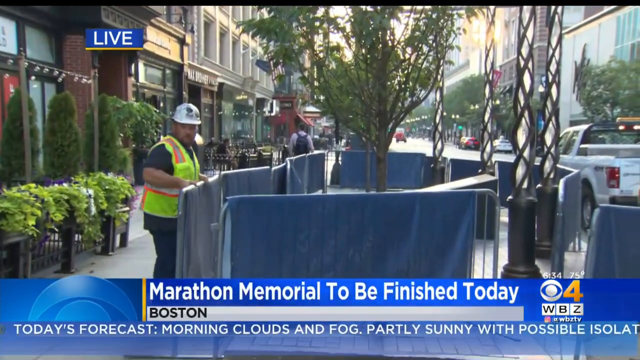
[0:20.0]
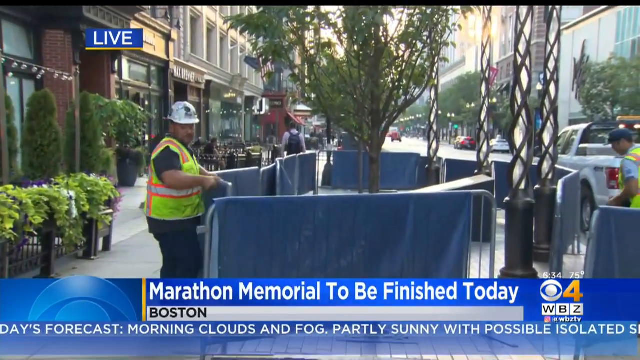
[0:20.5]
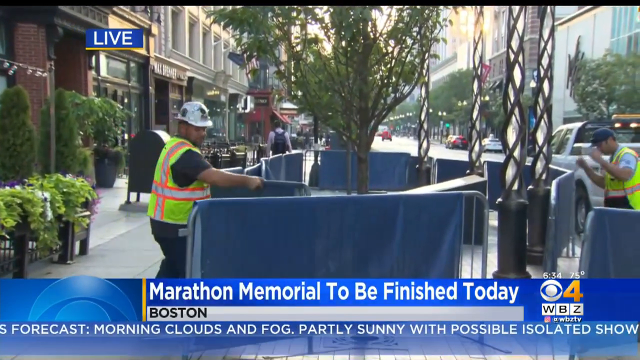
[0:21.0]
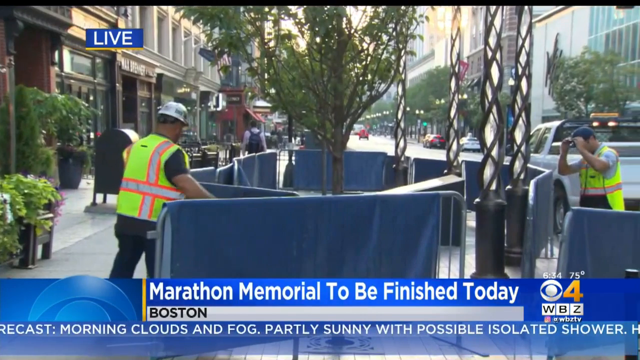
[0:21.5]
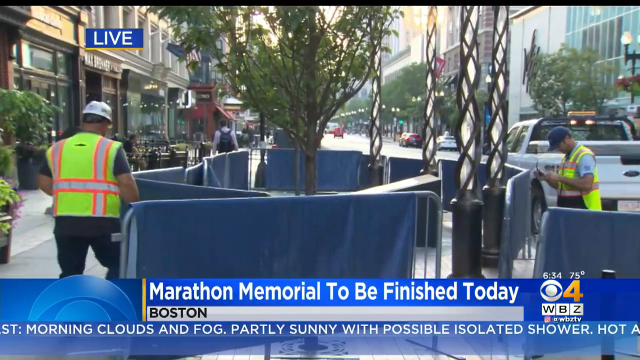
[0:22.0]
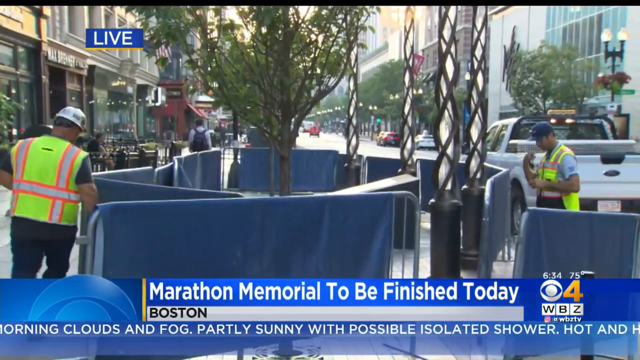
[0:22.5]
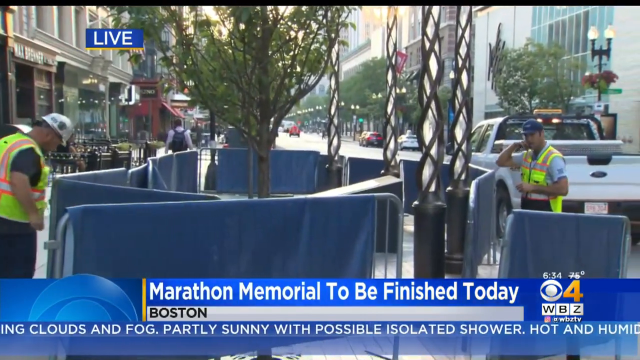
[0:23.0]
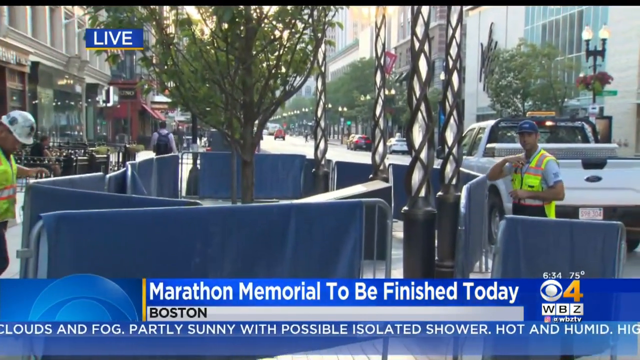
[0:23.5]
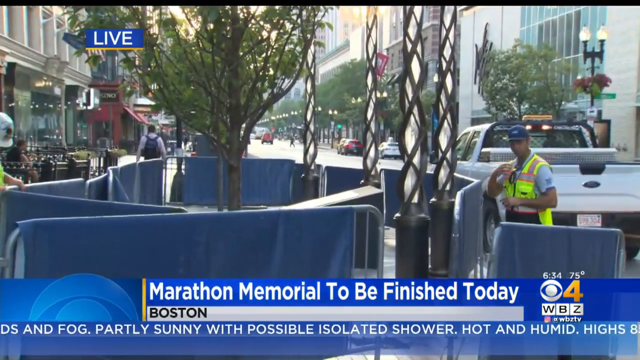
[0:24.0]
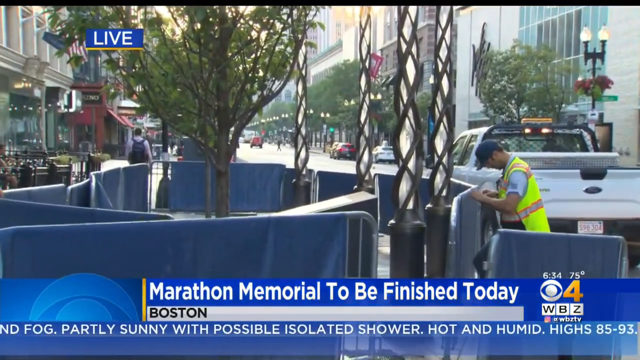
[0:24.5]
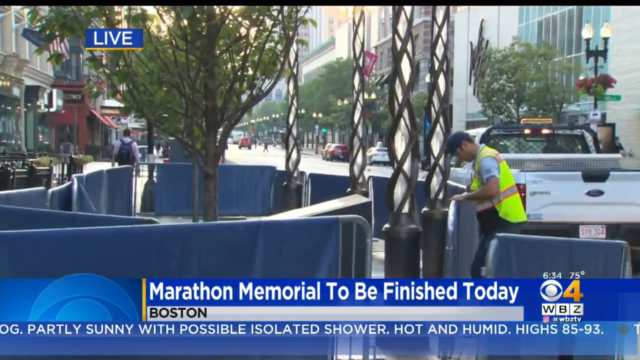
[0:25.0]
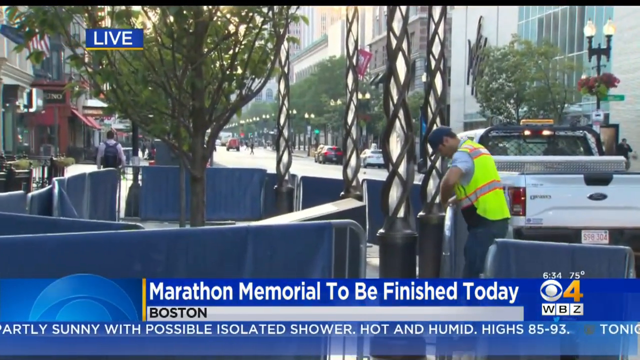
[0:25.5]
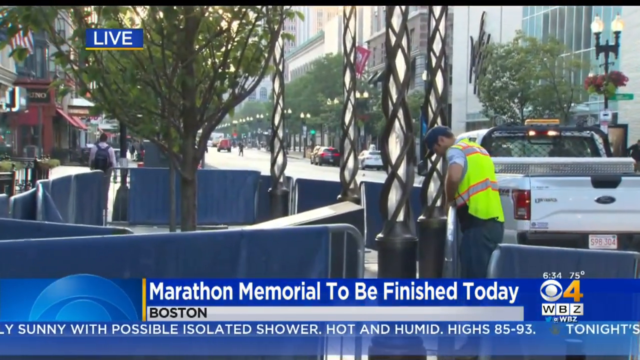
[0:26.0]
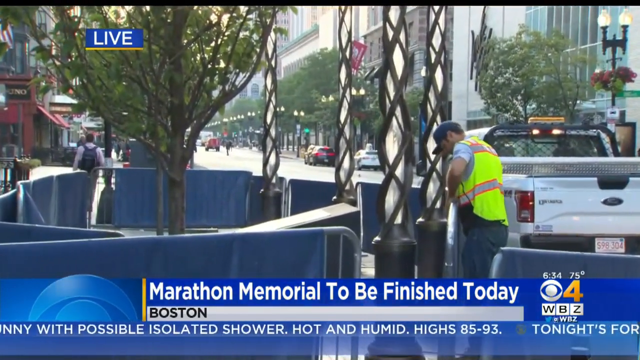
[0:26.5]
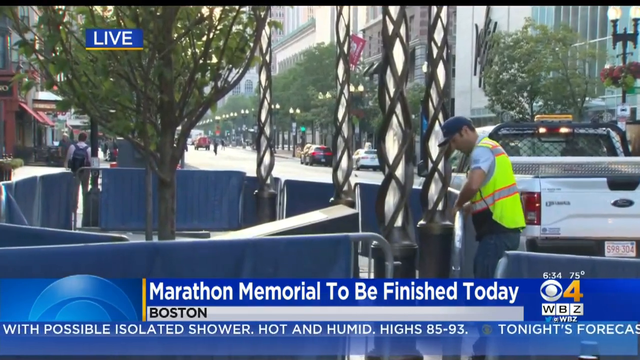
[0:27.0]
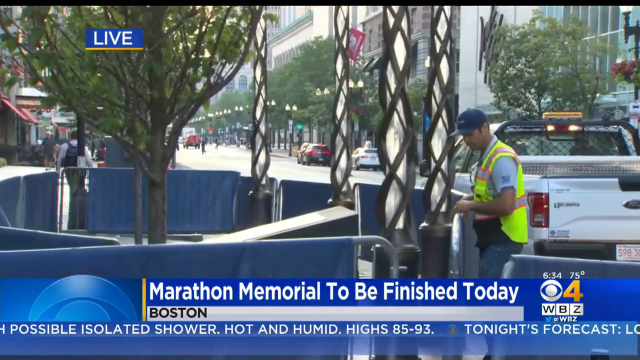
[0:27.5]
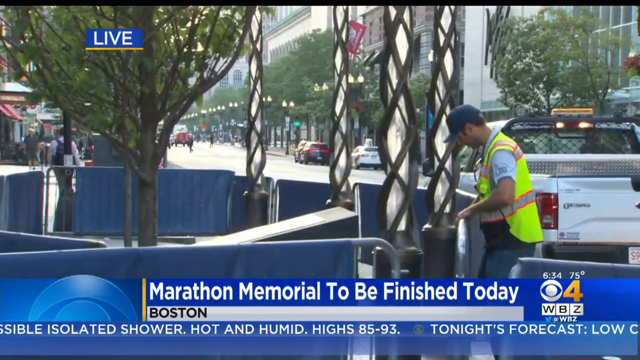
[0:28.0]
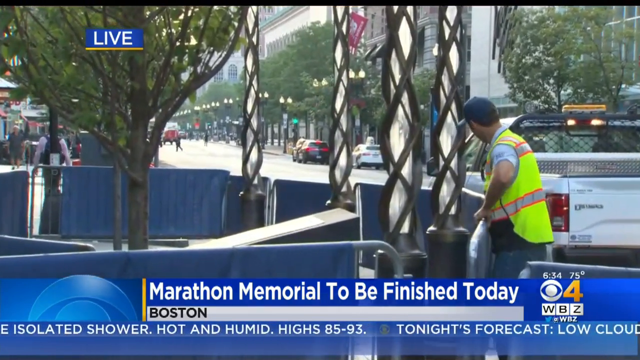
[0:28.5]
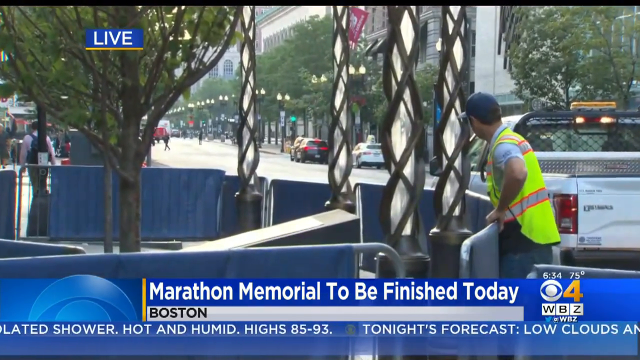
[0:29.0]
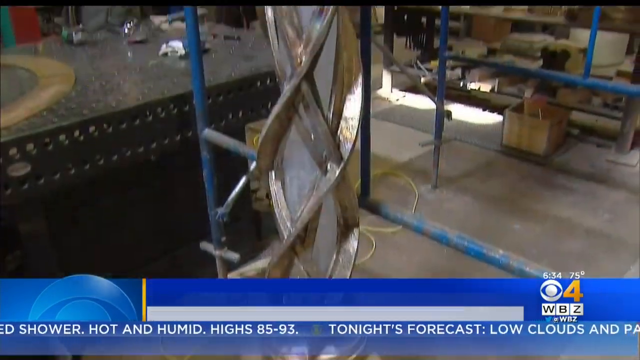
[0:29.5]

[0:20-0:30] The live broadcast shows people walking along the roadside. Something appears to be under observation or under construction. There are many cars and other vehicles, along with people who seem to be service workers.